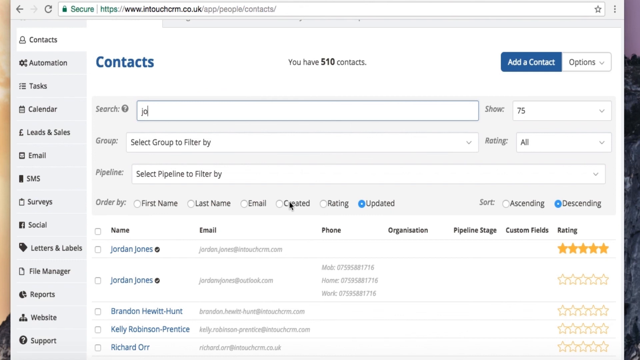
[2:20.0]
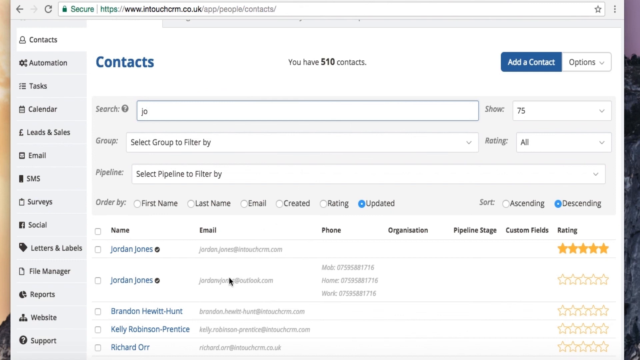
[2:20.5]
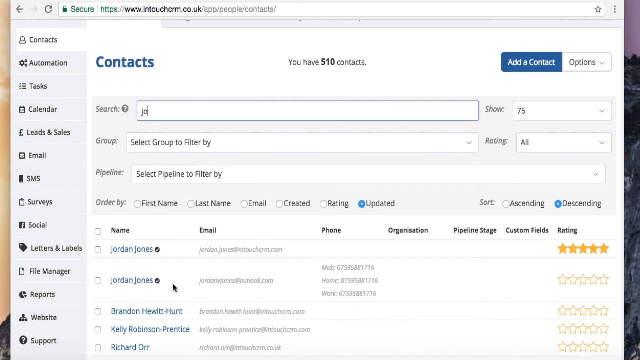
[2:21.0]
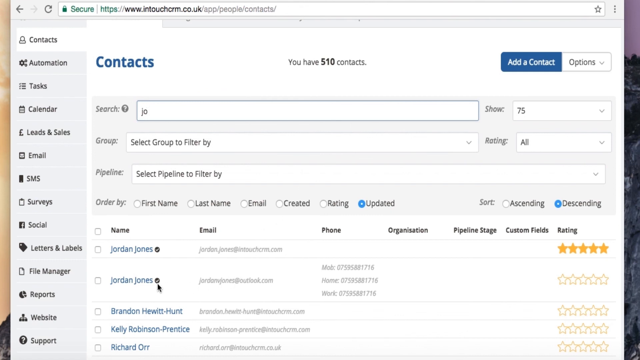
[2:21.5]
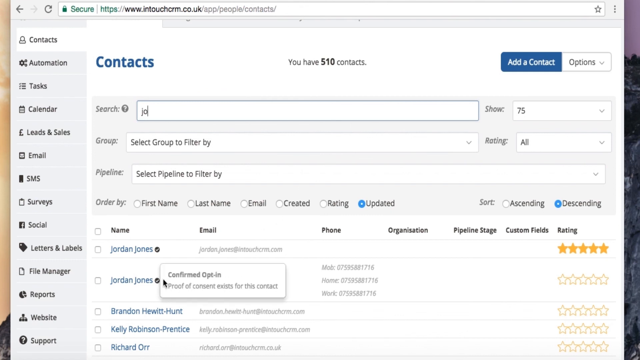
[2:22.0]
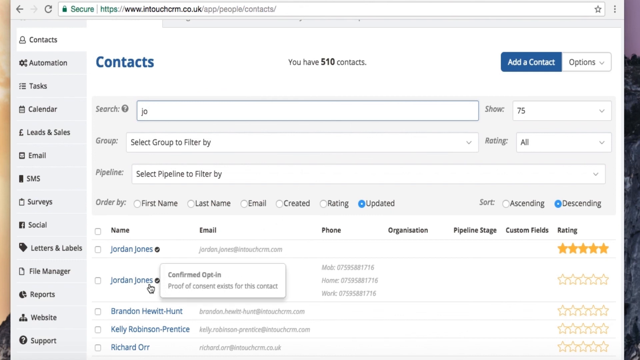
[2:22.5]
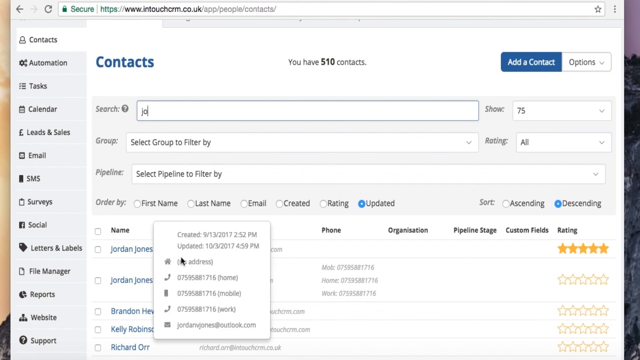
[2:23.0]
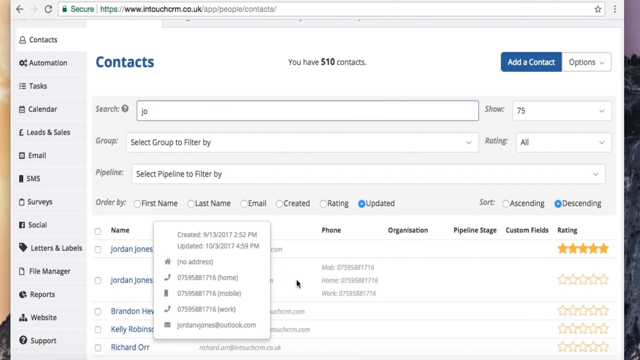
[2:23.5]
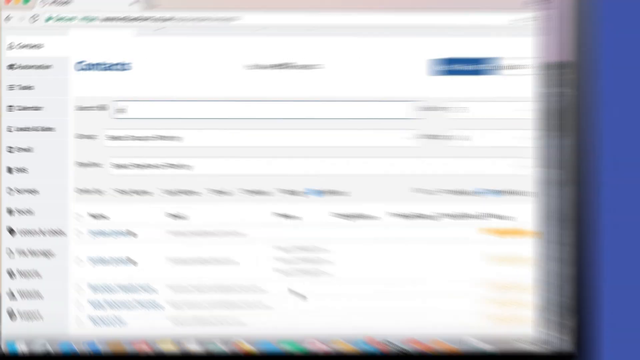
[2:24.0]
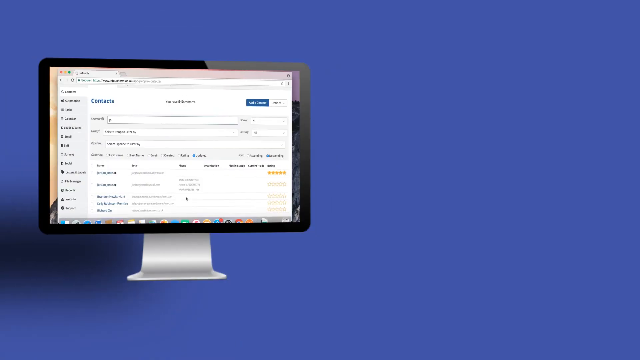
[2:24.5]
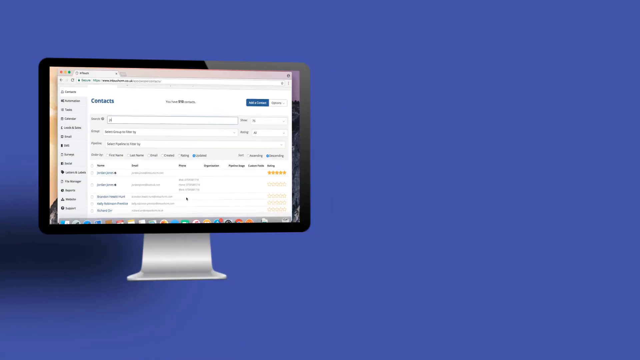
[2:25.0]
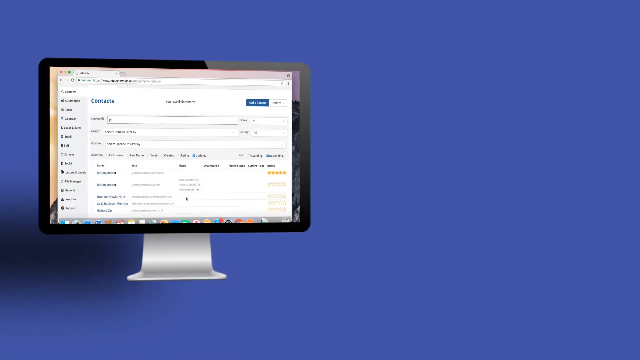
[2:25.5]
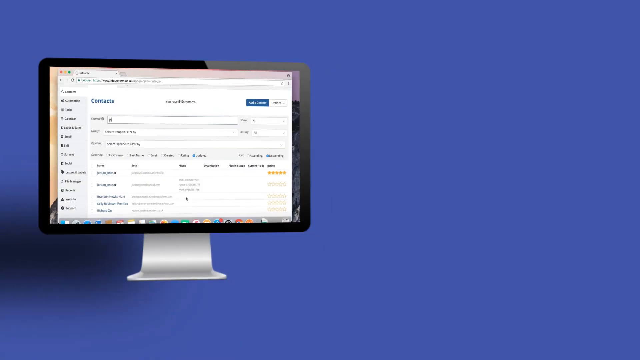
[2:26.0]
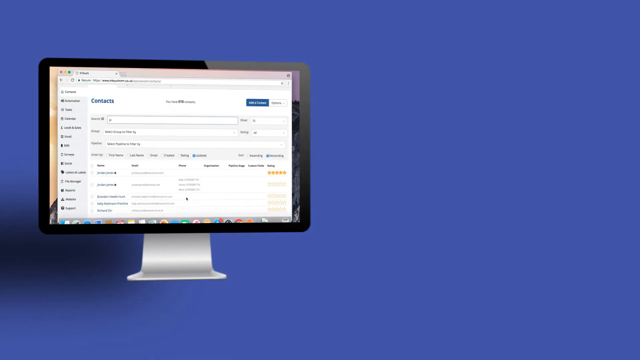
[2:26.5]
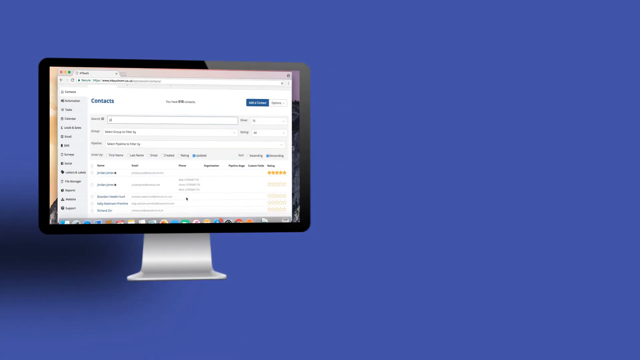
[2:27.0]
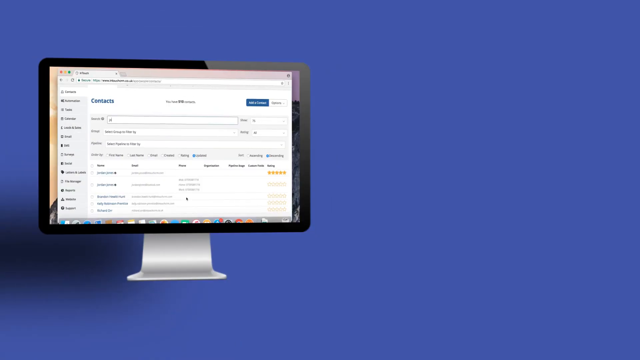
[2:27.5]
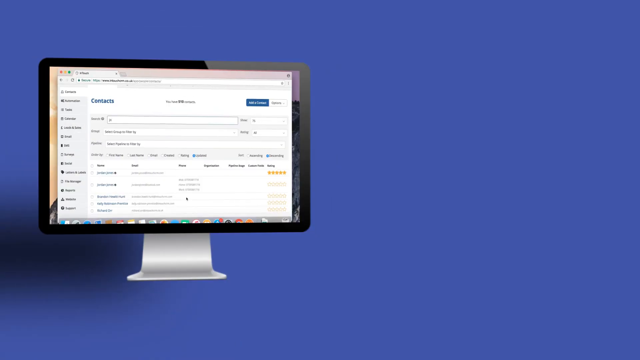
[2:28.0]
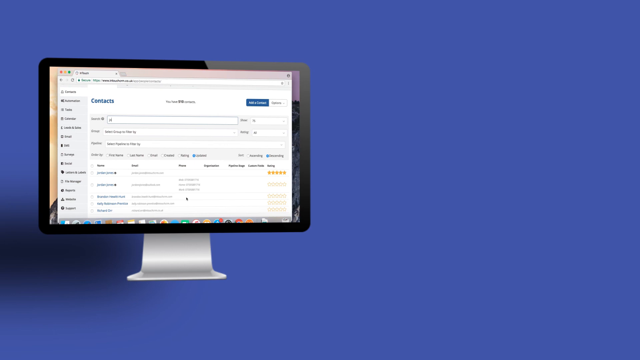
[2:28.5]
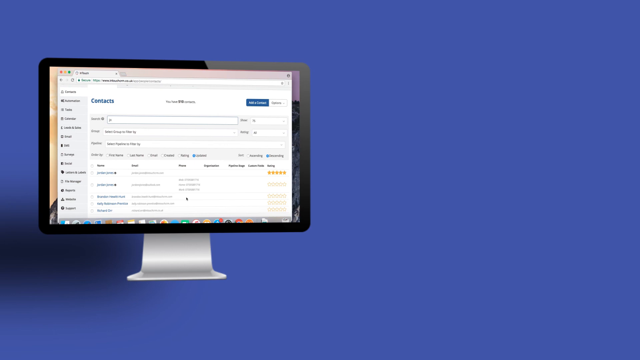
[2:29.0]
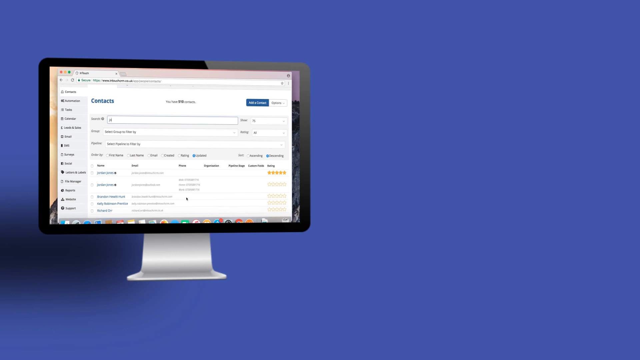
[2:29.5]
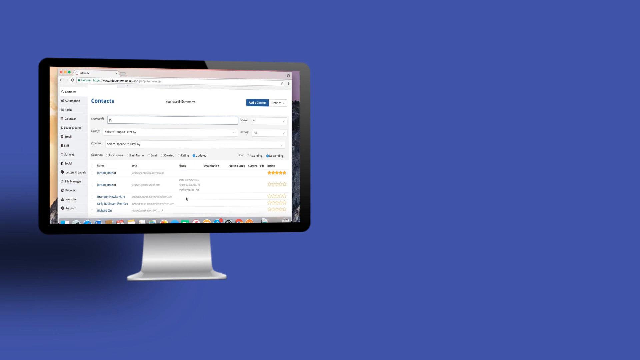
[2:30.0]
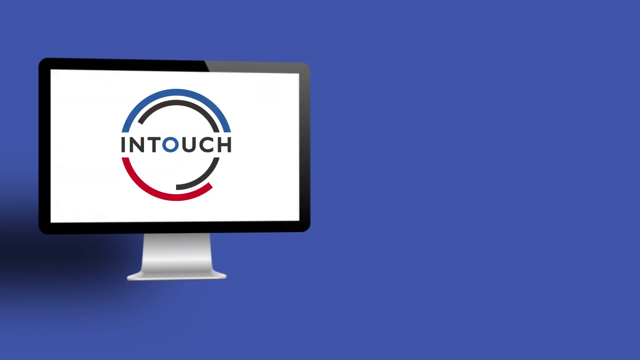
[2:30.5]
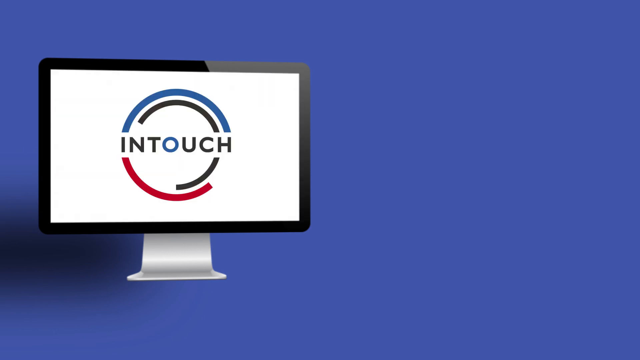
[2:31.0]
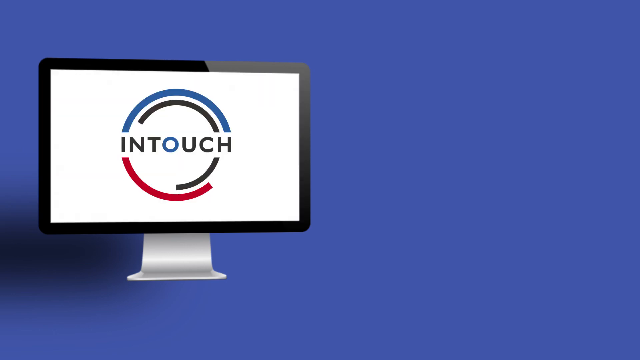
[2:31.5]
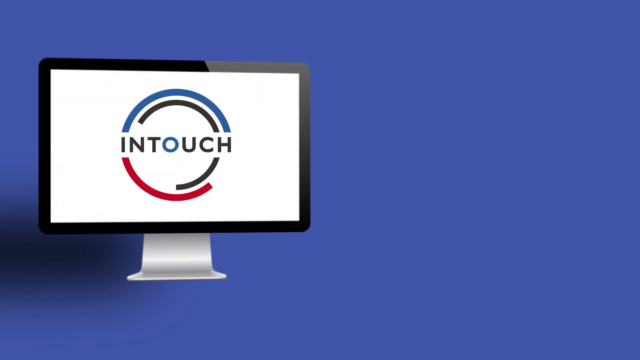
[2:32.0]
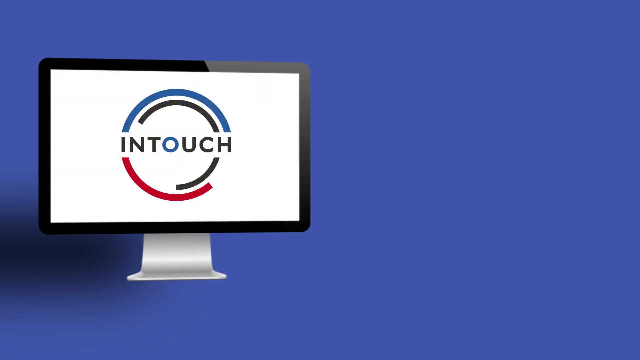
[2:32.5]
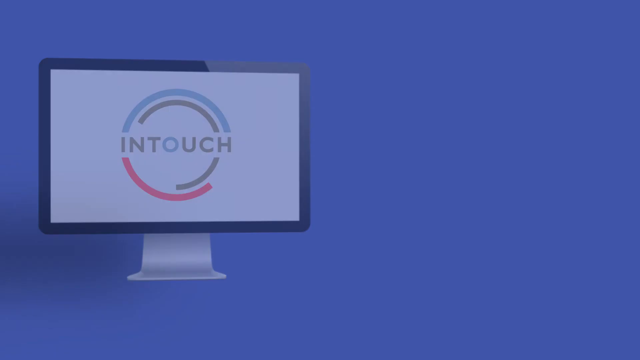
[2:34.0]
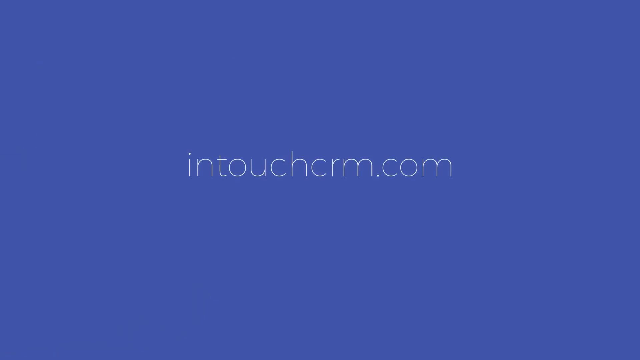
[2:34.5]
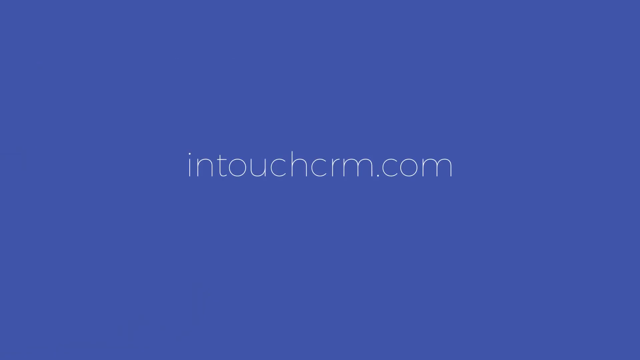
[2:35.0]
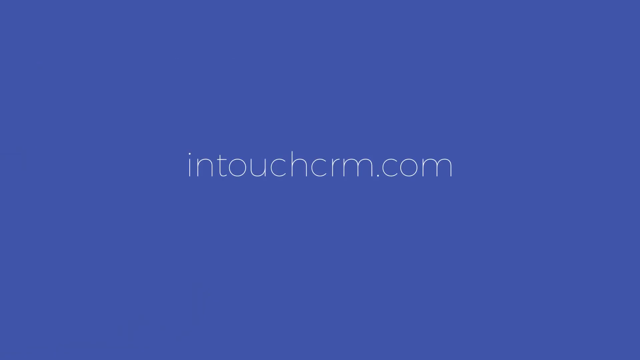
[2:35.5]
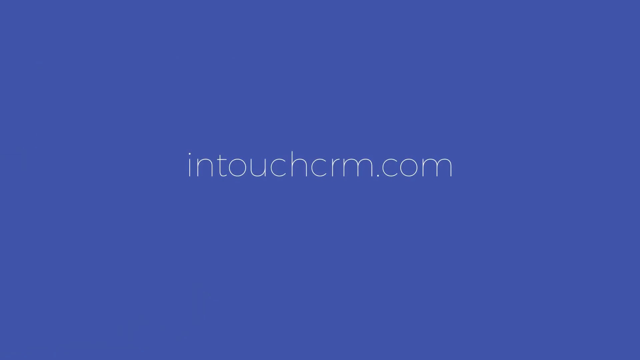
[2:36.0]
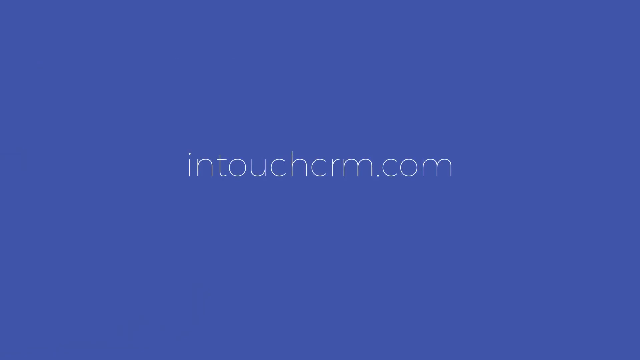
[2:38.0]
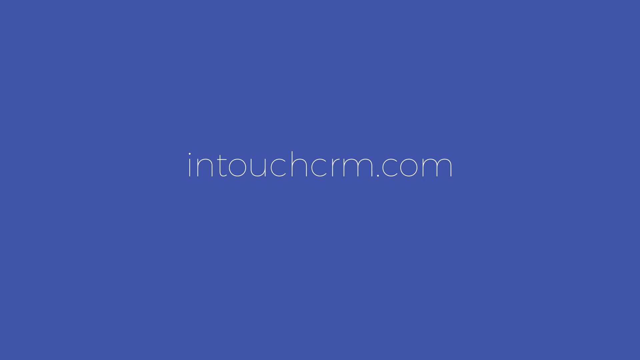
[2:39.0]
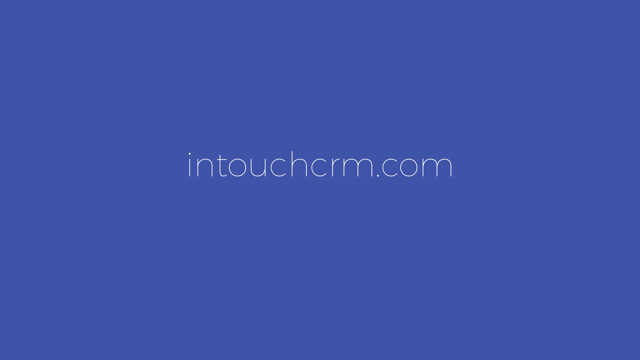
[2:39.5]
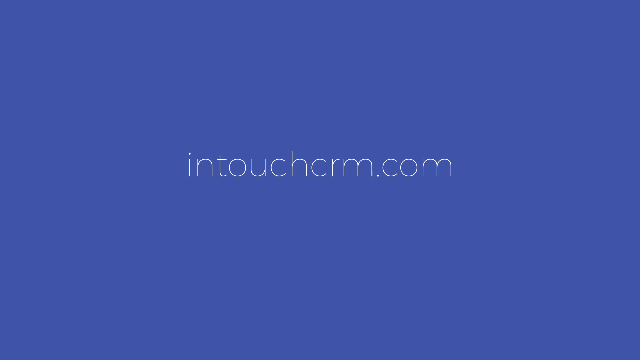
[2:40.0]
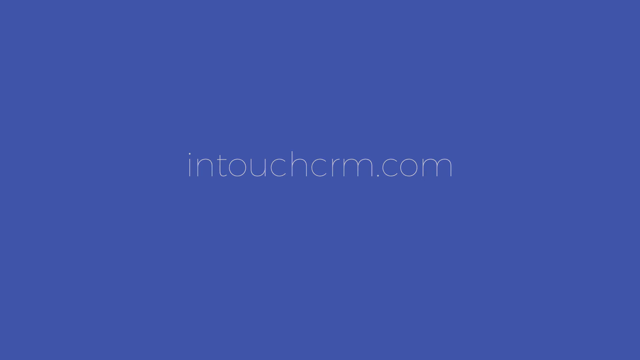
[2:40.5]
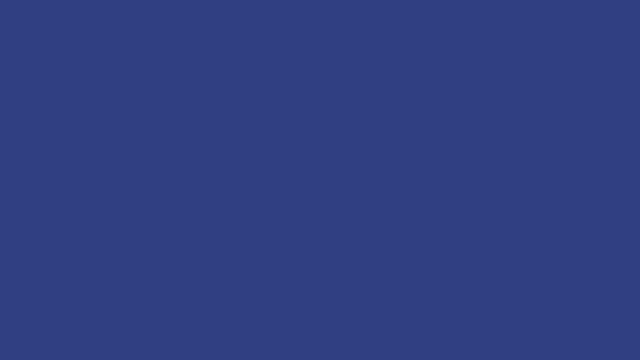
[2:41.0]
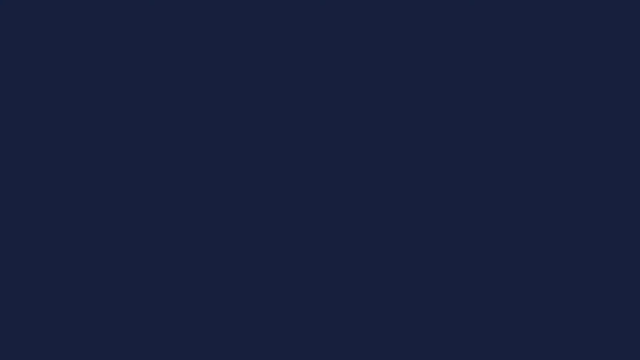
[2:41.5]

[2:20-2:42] After "Jo" is typed in the search bar, the cursor goes down to the emails, to the second one. Jordan Jones' name appears in the top two, with a little checkmark beside it showing he has been confirmed. Hovering over it pulls up a little pop-up showing created, updated and different options for his phone and address, including mobile, home and work phones. The cursor moves, and the view zooms back out as at the beginning: the laptop screen with a little gray stand underneath on the left side of the blue background, still showing his information. It then switches to a white background with InTouch in the center, with black going over the top, blue over top of that, black coming under the CH and going halfway down, and red coming from under the I and going three quarters of the way over. That fades off the screen, and "intouchCRM.com" appears in white in the center before fading to black.